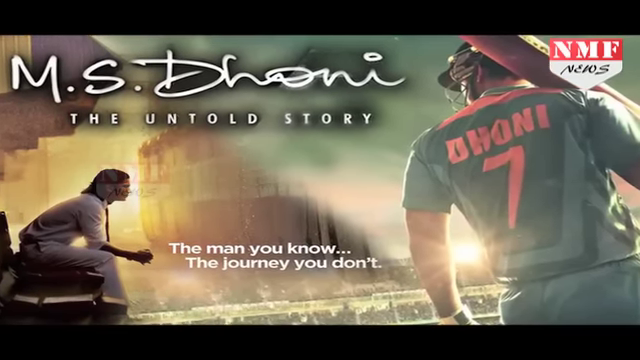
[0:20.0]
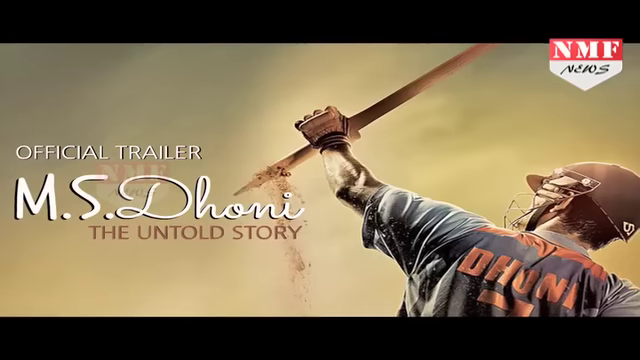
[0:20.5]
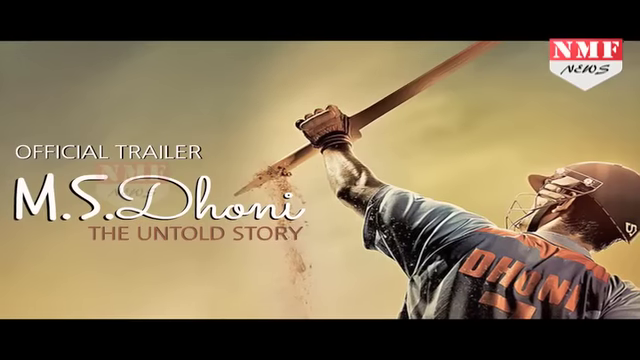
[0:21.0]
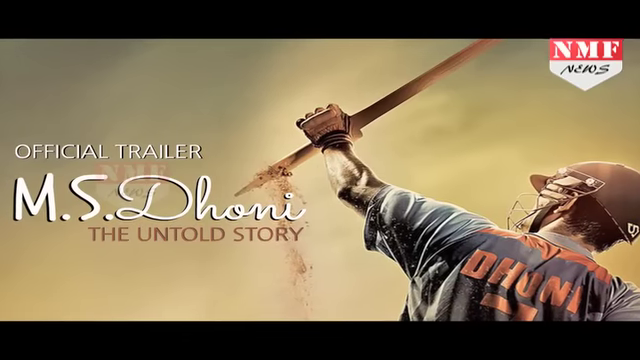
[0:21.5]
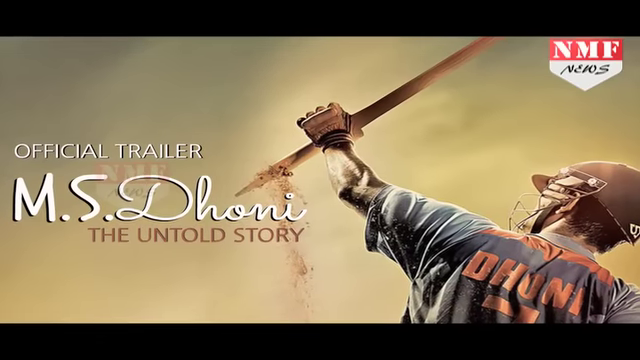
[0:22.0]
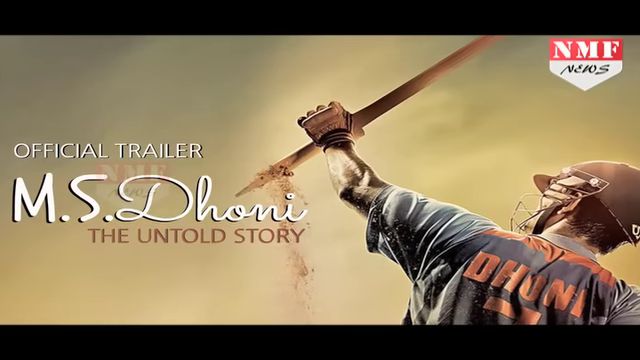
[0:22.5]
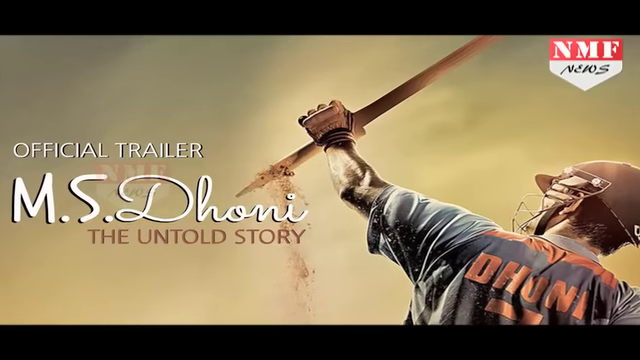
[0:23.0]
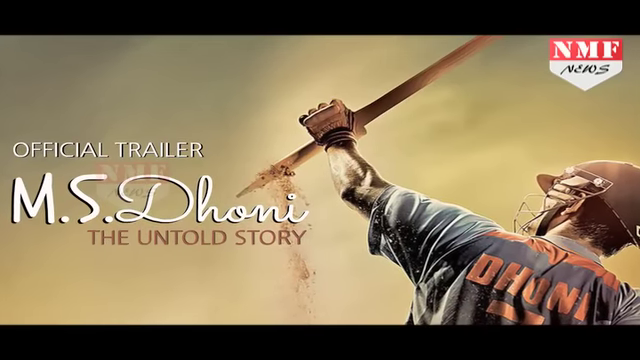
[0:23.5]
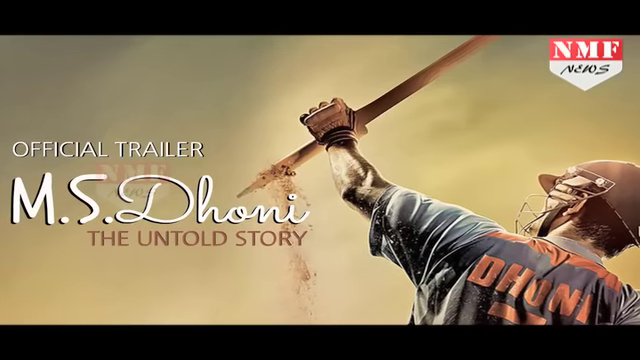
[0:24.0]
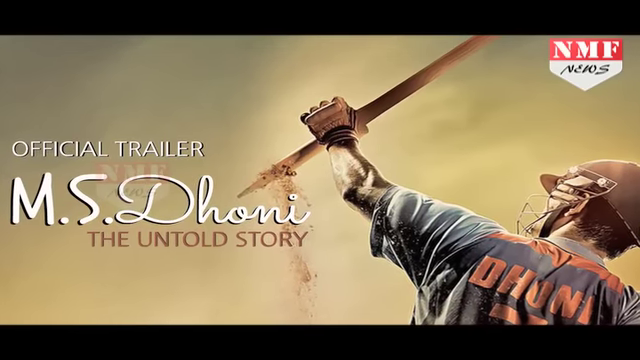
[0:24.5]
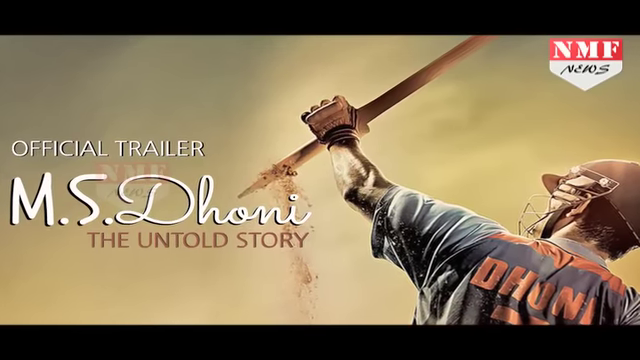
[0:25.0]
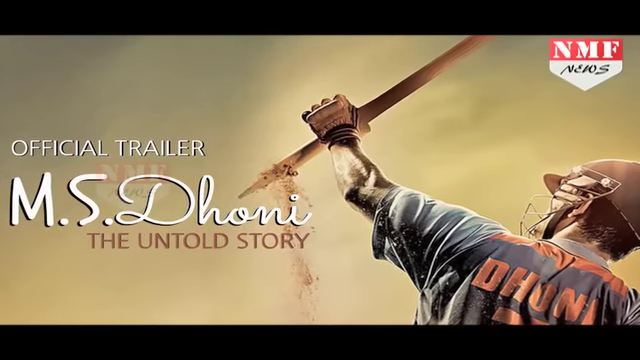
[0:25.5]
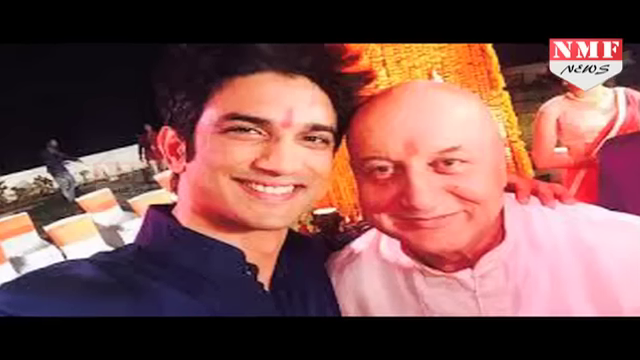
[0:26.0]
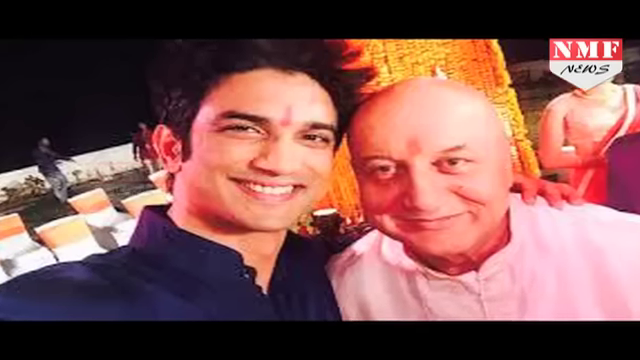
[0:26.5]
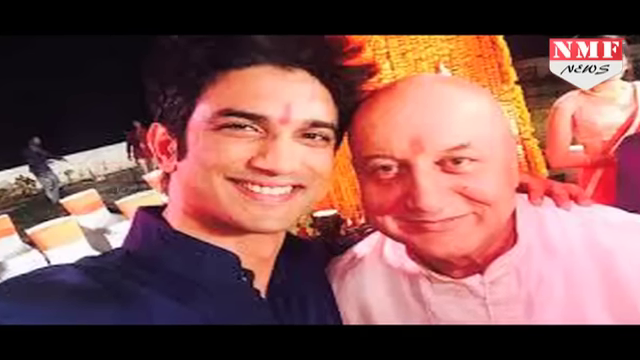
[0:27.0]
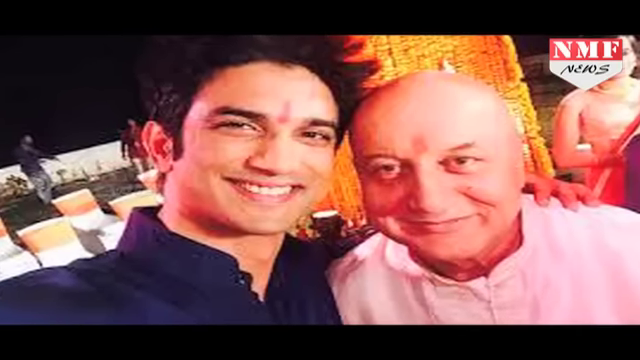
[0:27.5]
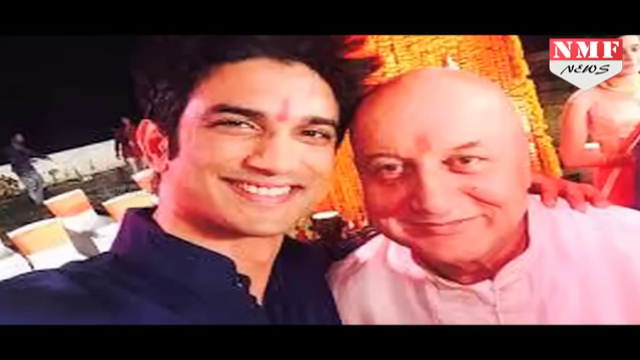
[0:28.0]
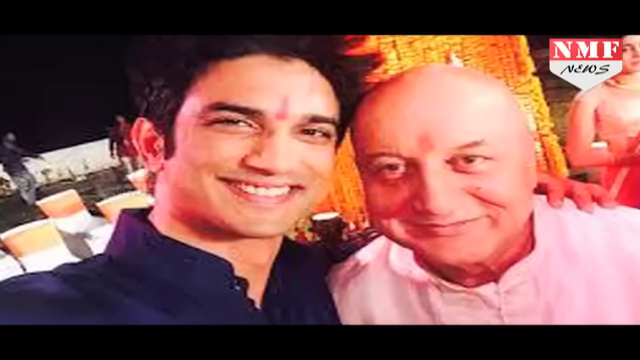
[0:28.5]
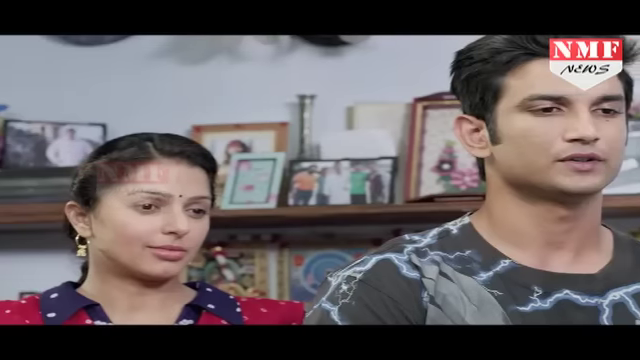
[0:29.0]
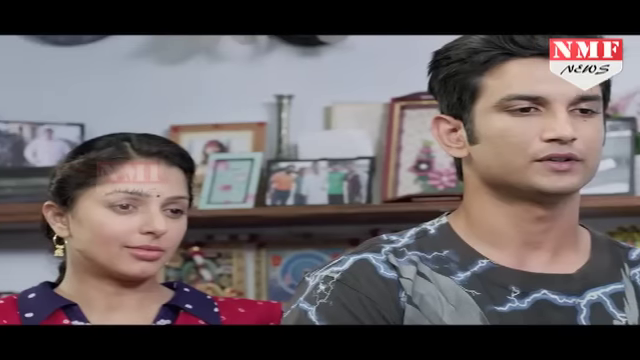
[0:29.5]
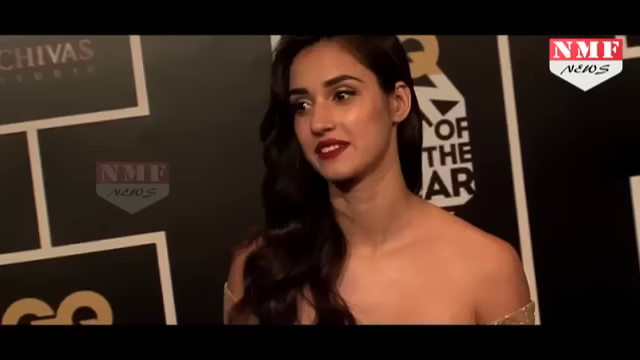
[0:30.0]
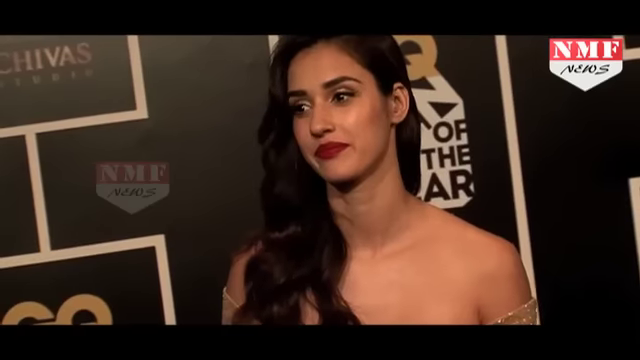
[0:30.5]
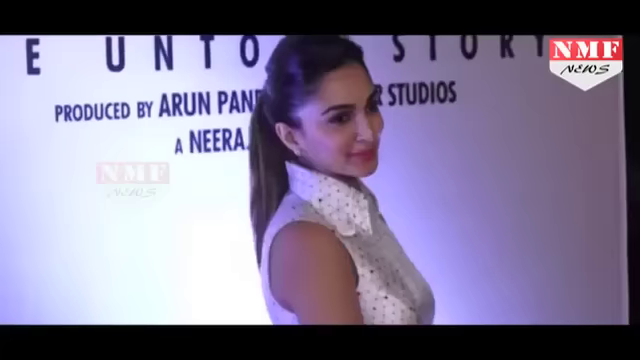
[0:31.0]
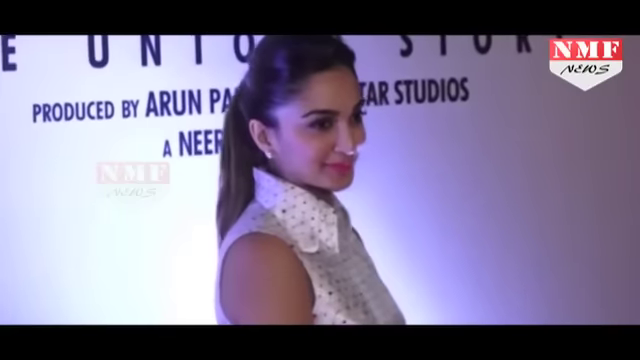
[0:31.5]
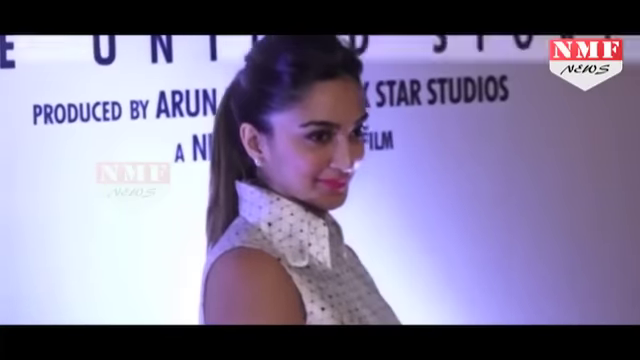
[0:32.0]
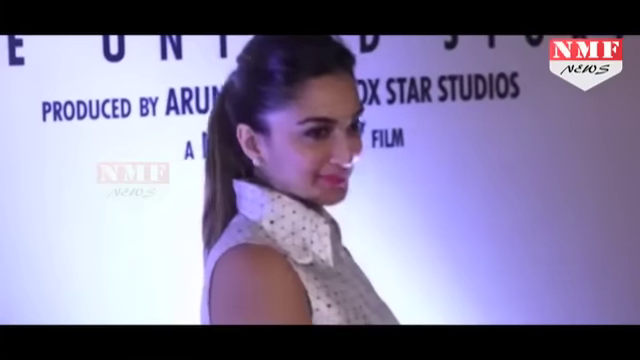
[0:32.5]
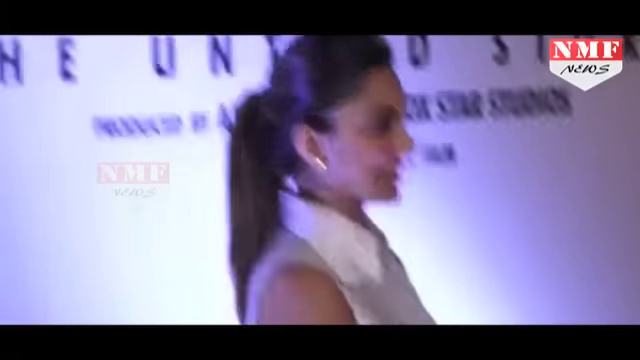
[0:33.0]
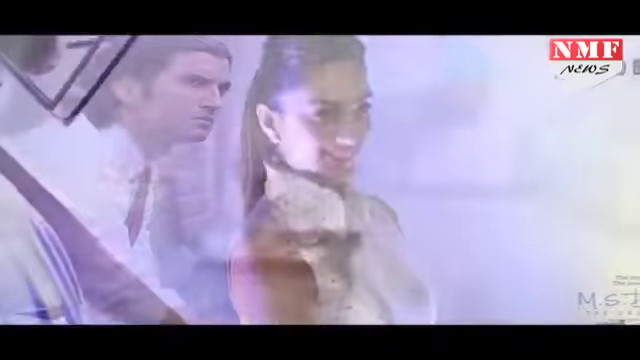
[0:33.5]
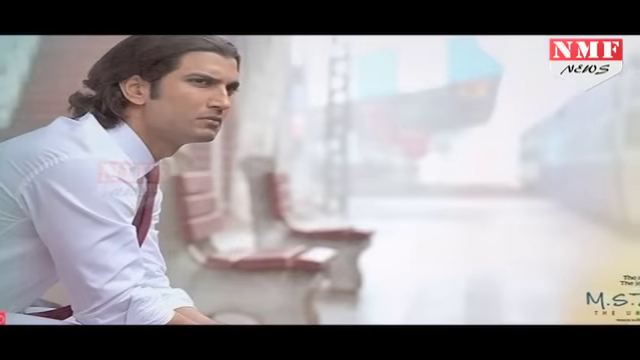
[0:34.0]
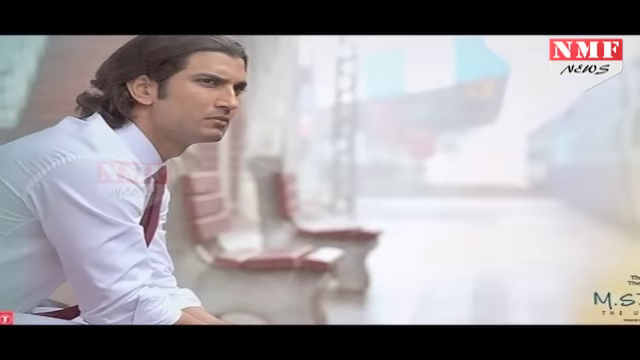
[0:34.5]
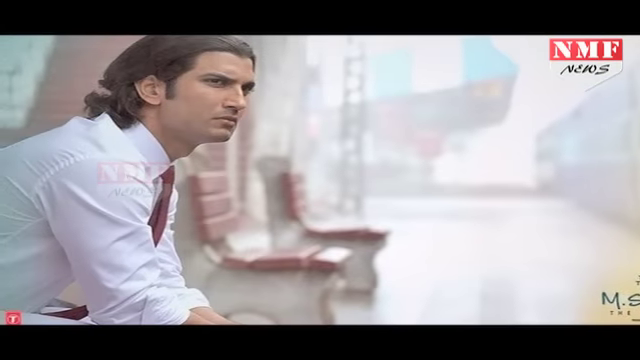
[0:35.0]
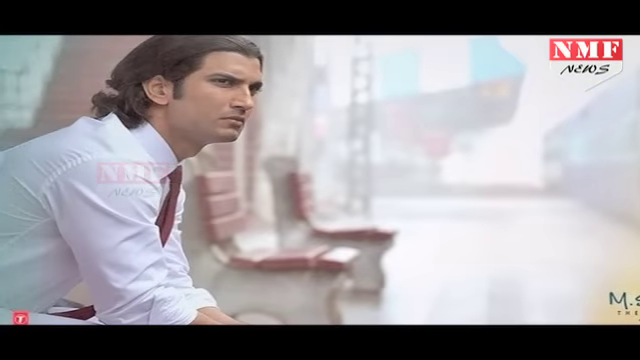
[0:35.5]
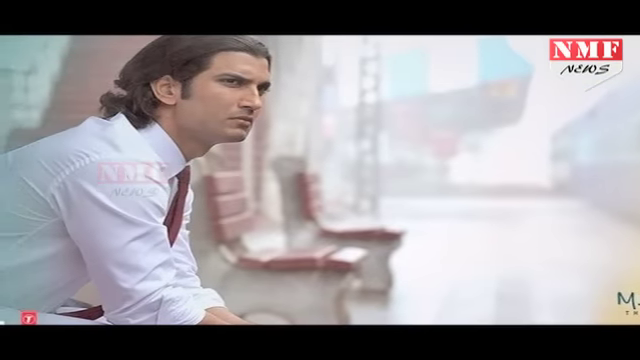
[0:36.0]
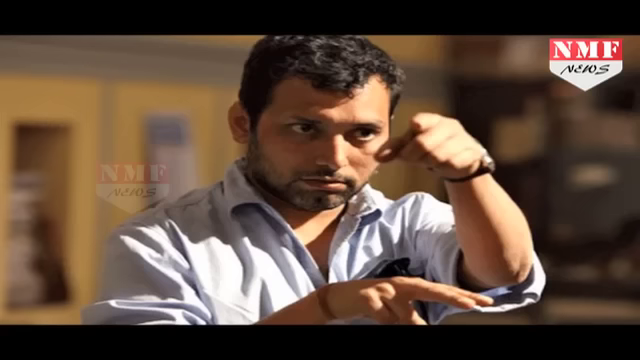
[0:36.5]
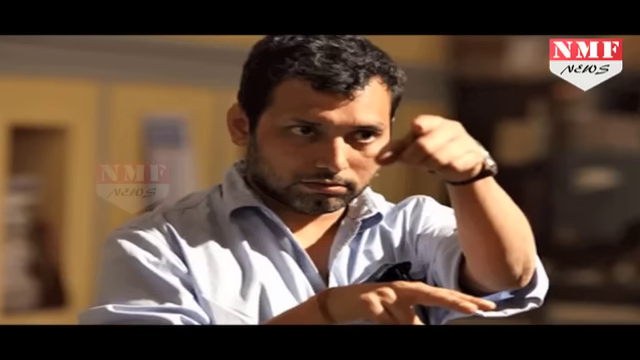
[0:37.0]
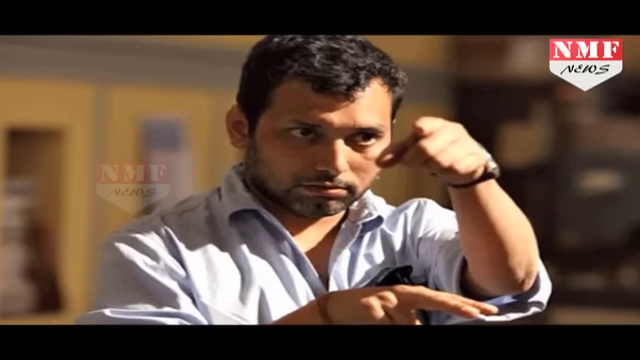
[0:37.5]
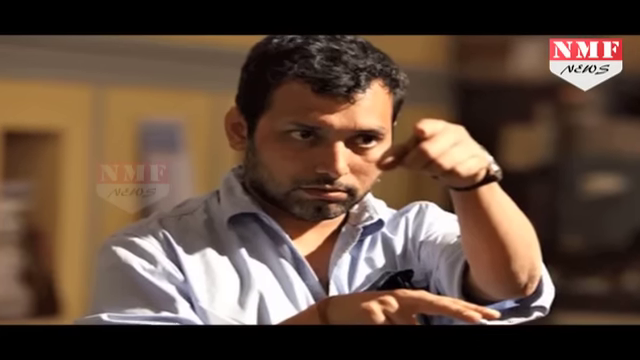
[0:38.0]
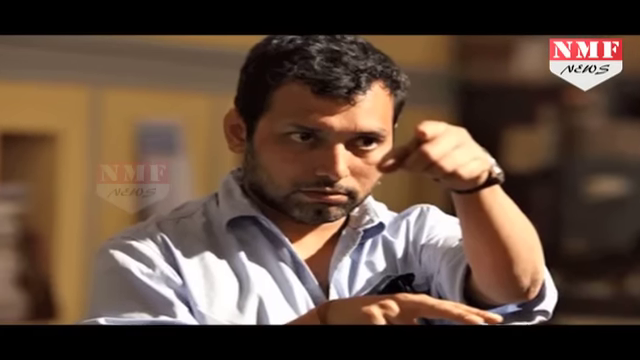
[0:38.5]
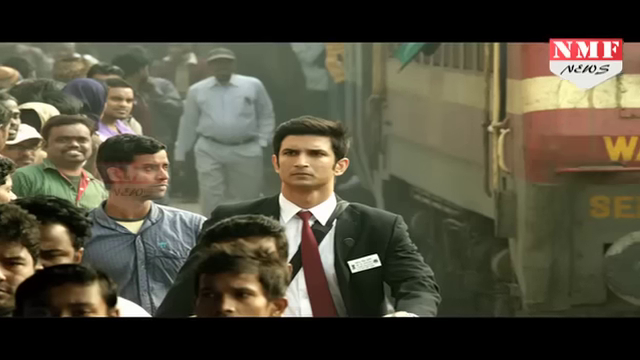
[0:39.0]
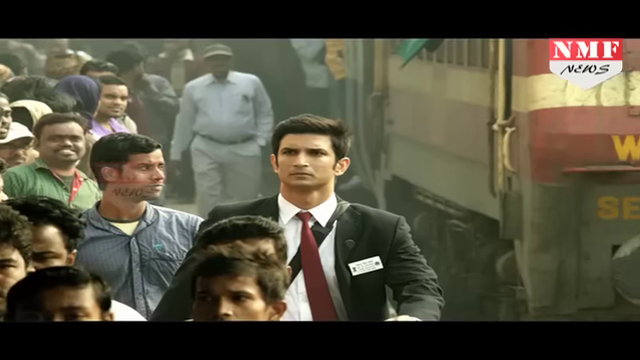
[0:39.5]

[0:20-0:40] The video features a movie called MS Dhoni, The Untold Story, The Man You Know, The Journey You Don't, with a collage of scenes from the movie. One shows a person who looks like a baseball or lacrosse player wearing a mask, seen from the back of his jersey with something up over his shoulder. To the left, he sits in a chair in dress pants, a dress shirt and a tie, leaning over as if contemplating something. Next comes the official trailer of MS Dhoni, The Untold Story, again with a picture of him in his helmet and jersey holding some sort of object in his hand. A good-looking man with dark hair is on the left and an older, balding man is on the right; the two appear to be having a conversation. Members of what looks to be his family are shown, followed by a beautiful actress with long, dark hair. The director is also shown giving direction, along with parts of scenes from the movie.